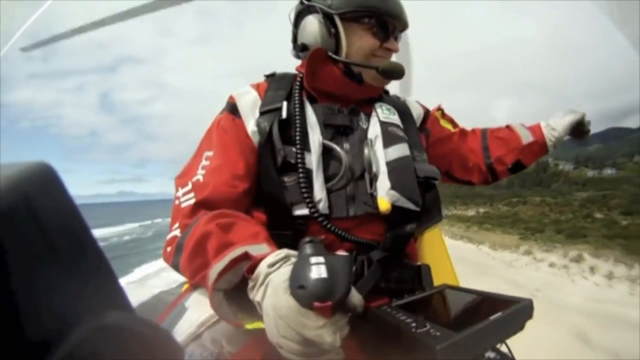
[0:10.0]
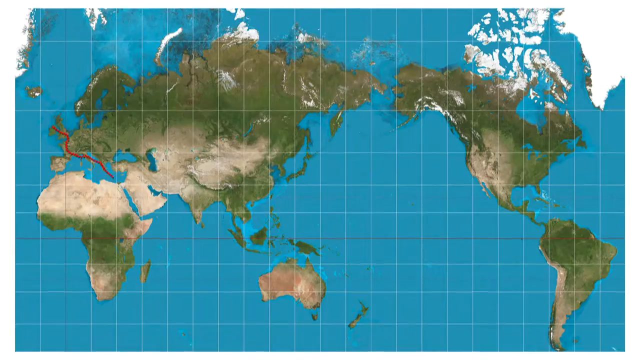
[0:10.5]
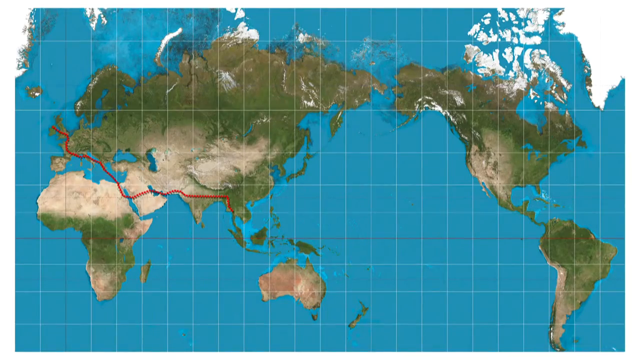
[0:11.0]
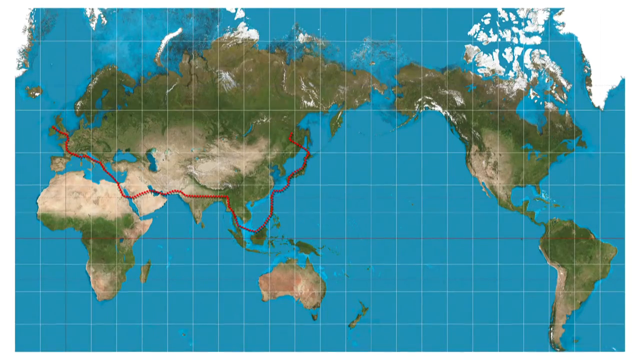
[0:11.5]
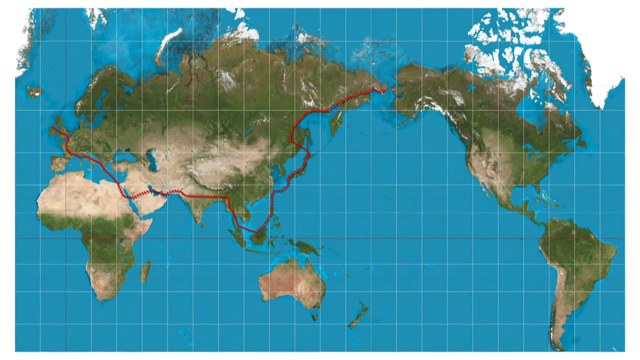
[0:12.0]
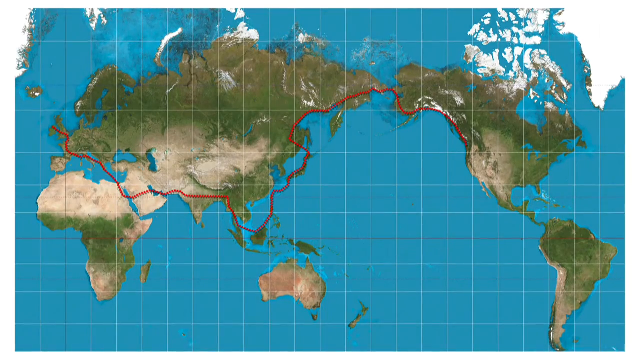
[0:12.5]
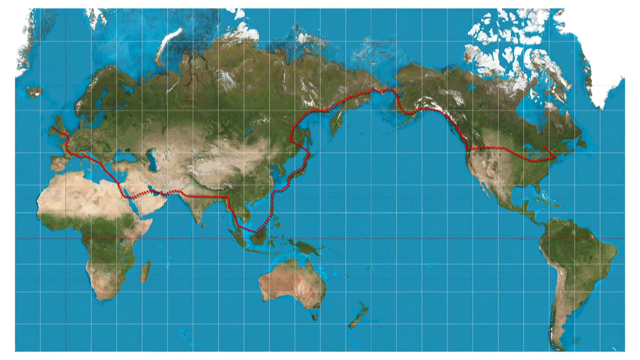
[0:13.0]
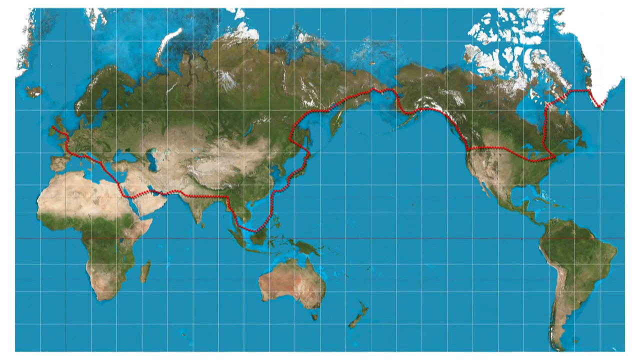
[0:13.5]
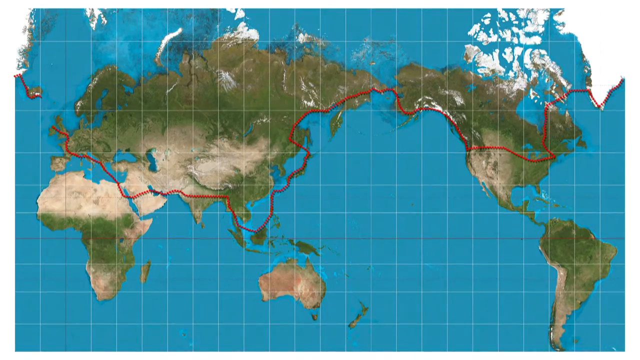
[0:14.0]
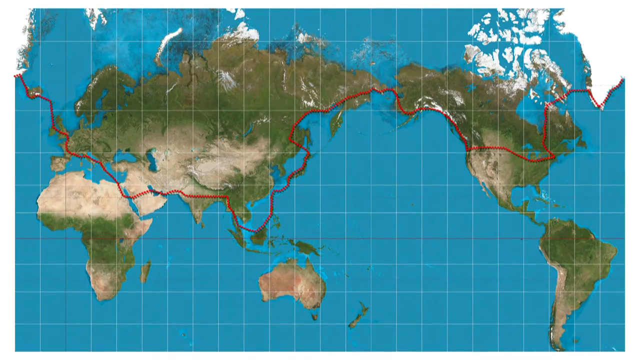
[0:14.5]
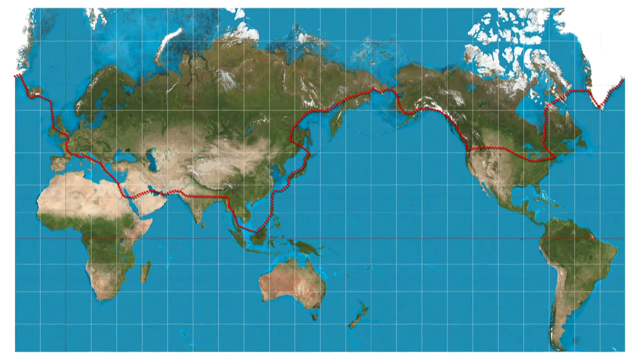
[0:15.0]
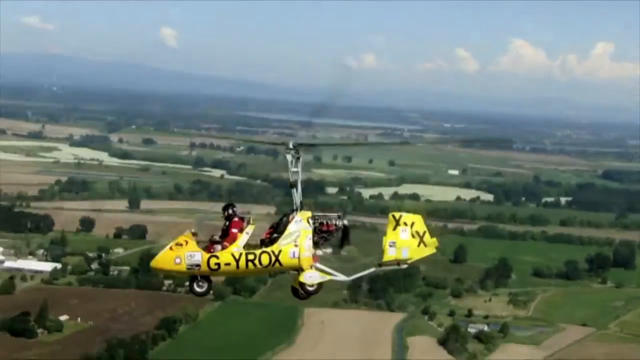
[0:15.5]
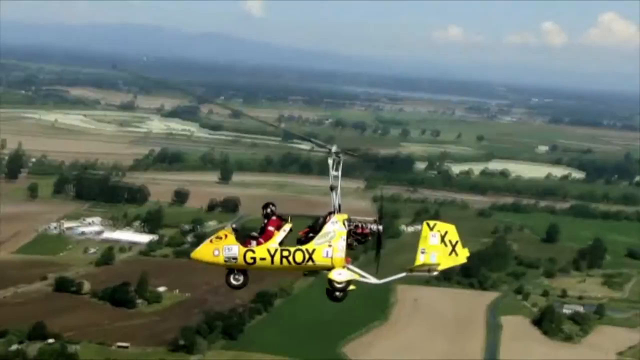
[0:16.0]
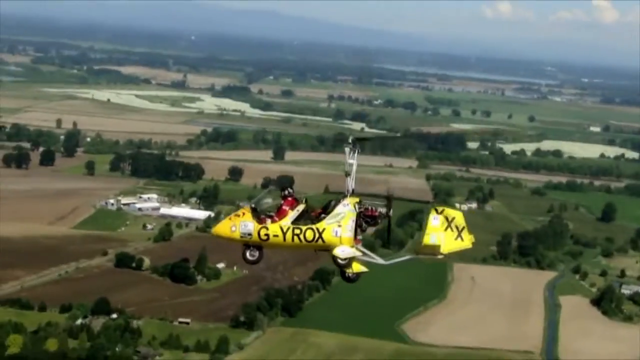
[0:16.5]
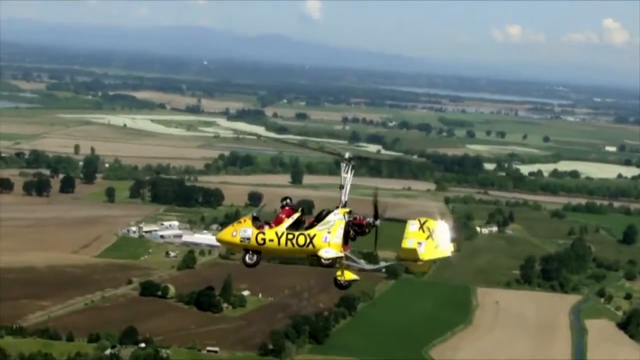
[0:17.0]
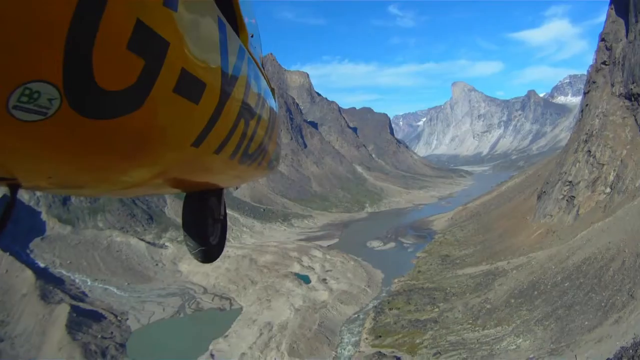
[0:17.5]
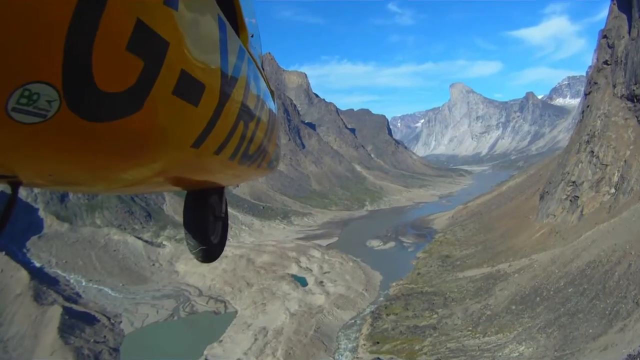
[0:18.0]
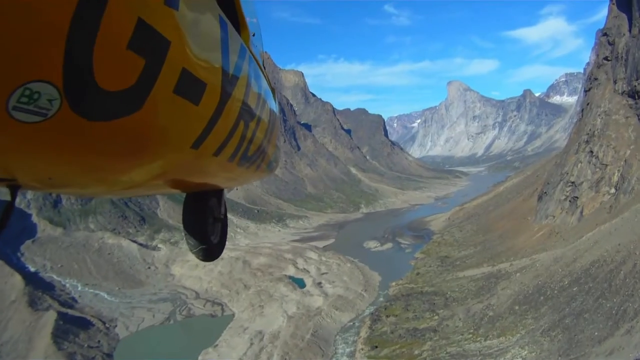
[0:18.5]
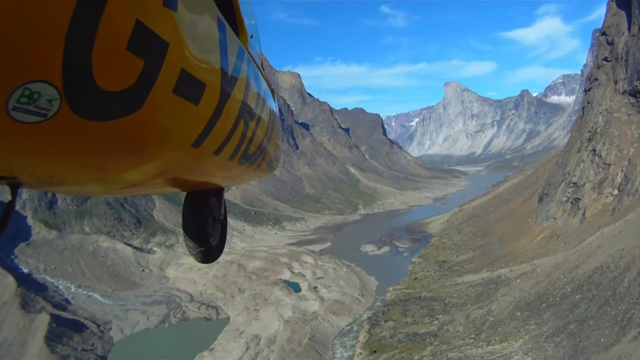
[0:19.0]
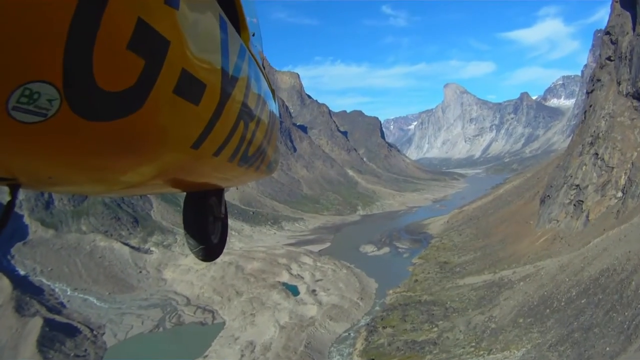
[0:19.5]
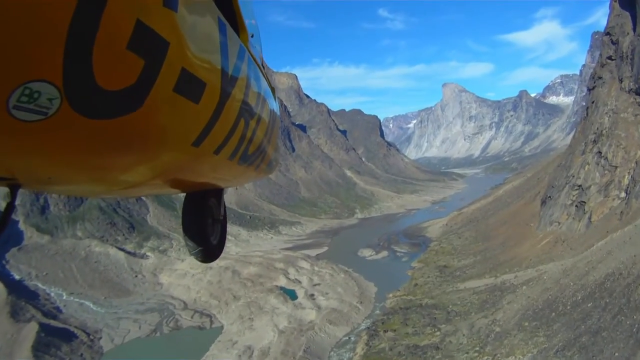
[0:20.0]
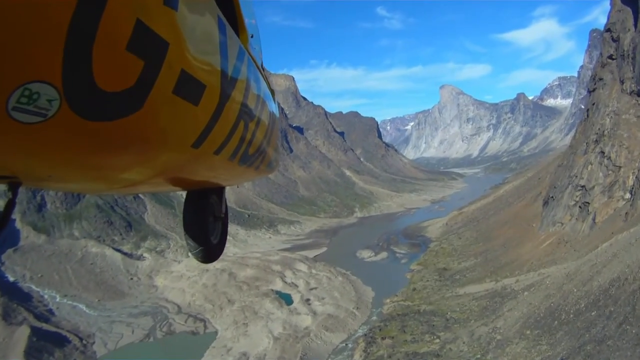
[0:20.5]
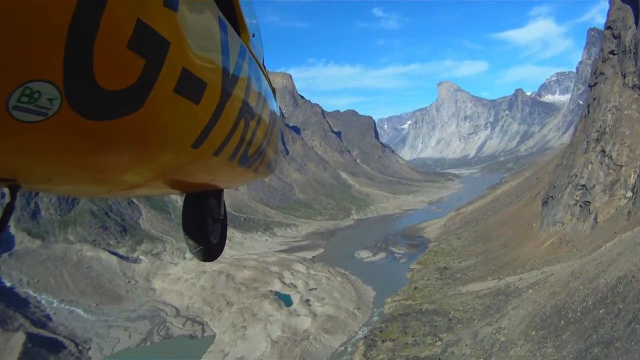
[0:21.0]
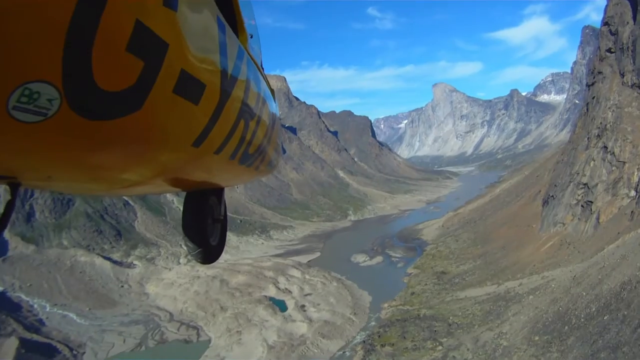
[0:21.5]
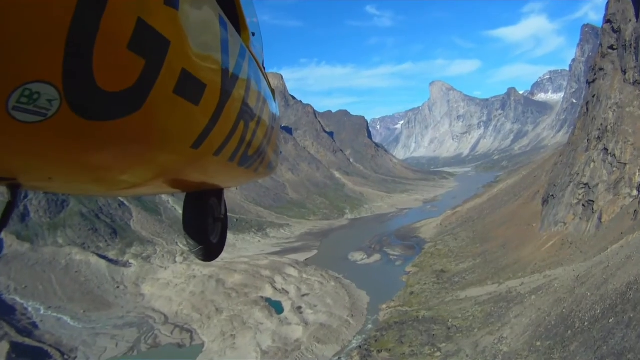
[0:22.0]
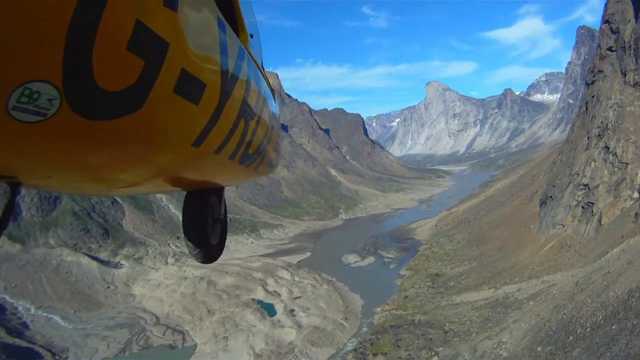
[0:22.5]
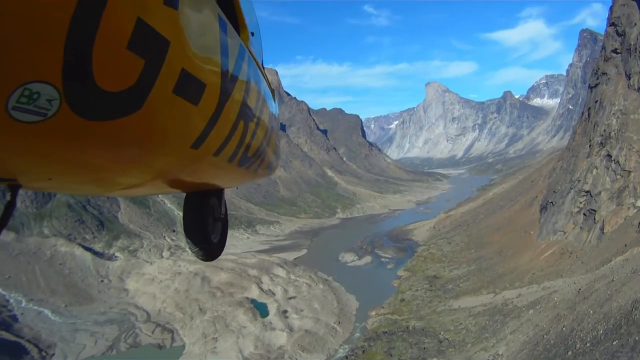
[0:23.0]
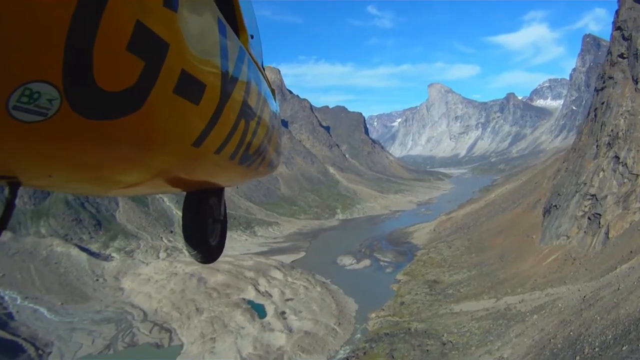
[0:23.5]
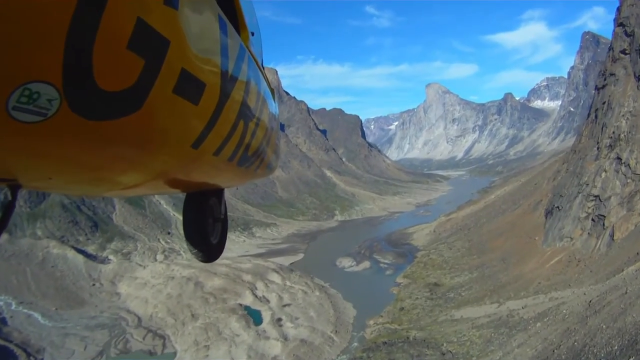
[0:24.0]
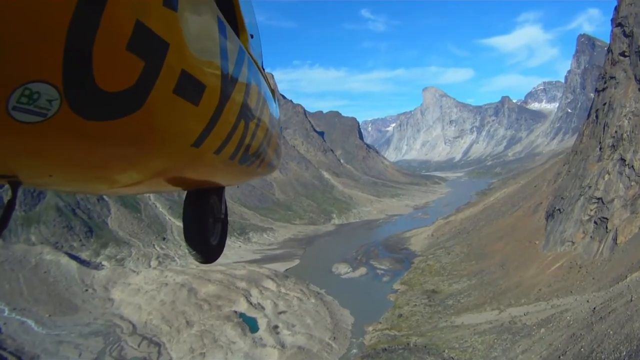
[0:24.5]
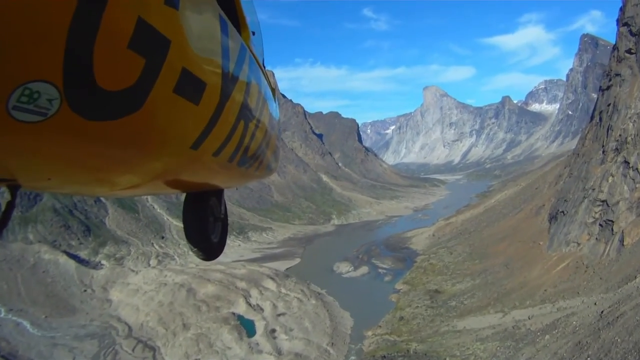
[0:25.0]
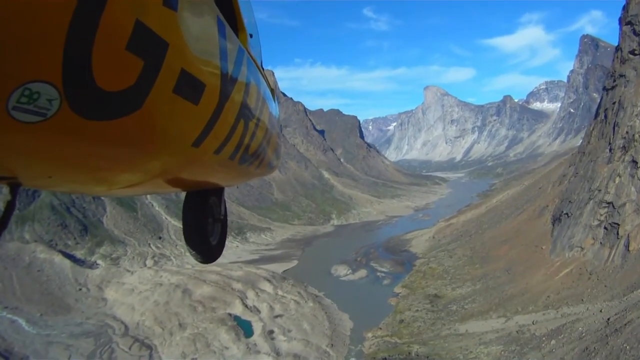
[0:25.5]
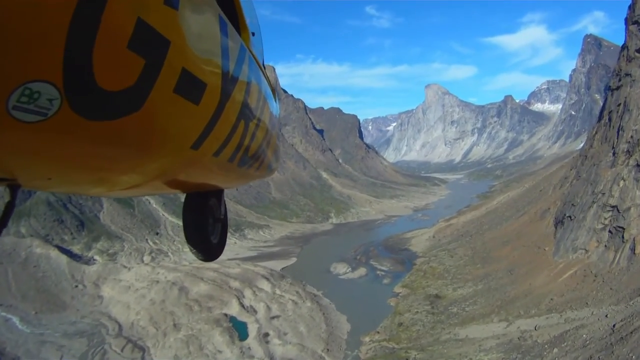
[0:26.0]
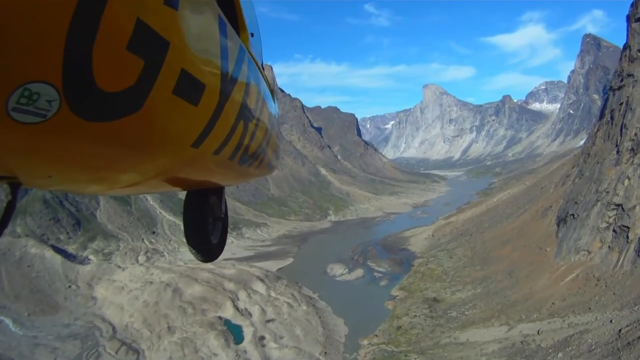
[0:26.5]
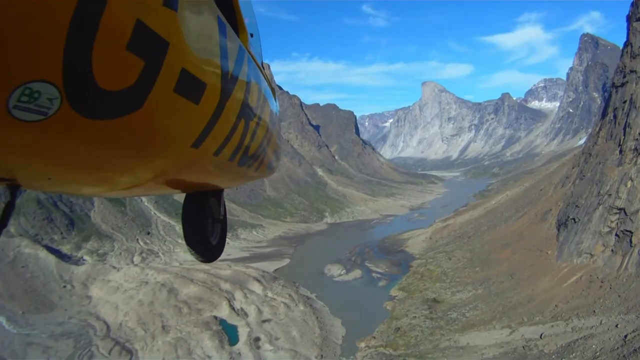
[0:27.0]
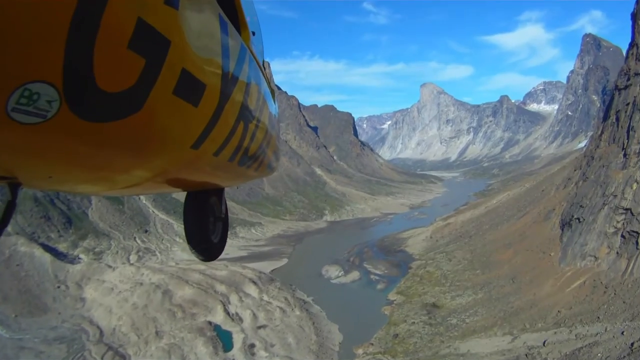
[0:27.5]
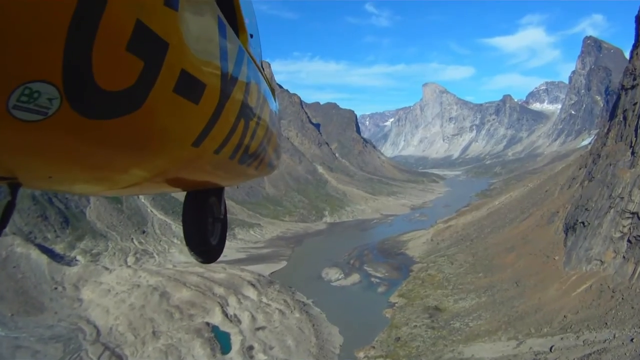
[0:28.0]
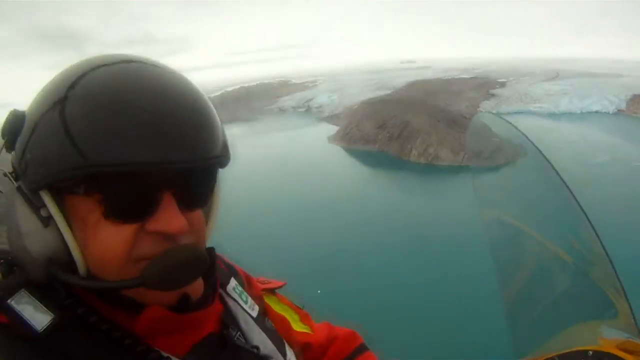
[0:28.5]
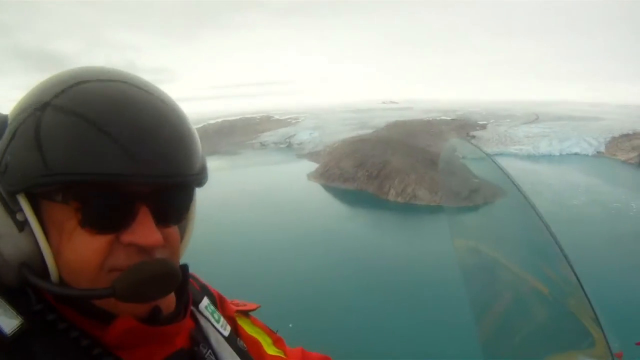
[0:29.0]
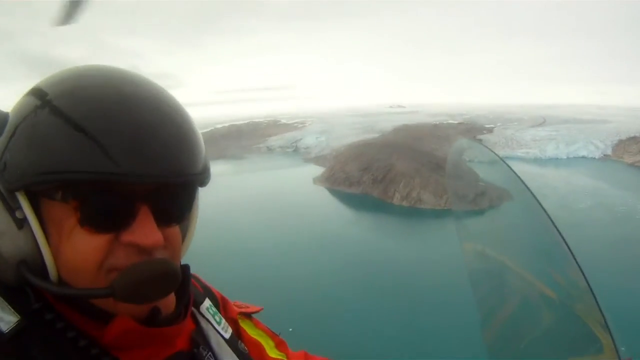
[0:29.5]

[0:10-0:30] A Caucasian man appears to be in his own personal two-person helicopter. He seems to wave at some people as he flies over what looks like a beach, with the beach and the water visible behind him. He wears what looks like an all-red flight jacket and apparently a black parachute. A world map then appears, seeming to show him over Europe; he is possibly flying around the world. The map shows a line, but it is hard to tell where he is going. Next he flies through a canyon with mountains on either side of him, apparently following a river that cuts through the mountains. There is no snow on the tops of the mountains. Then a different view of him flying shows islands close to him, some clouds, and very blue-greenish water.